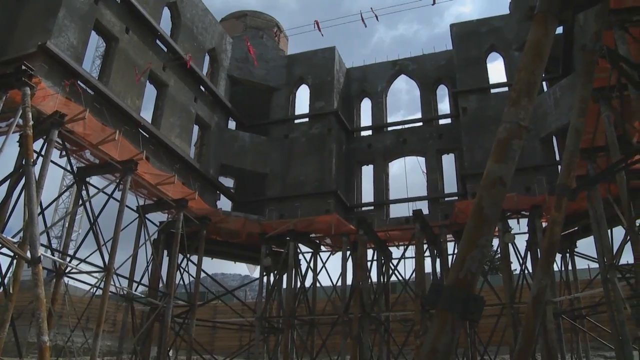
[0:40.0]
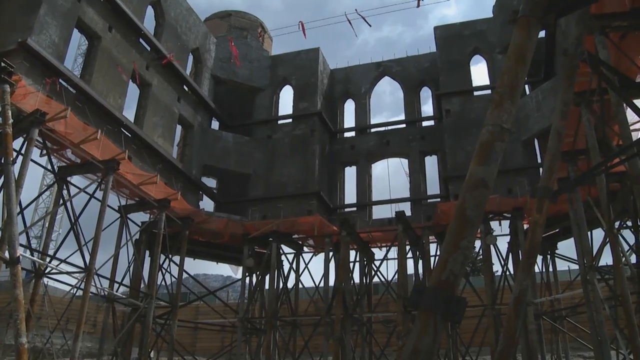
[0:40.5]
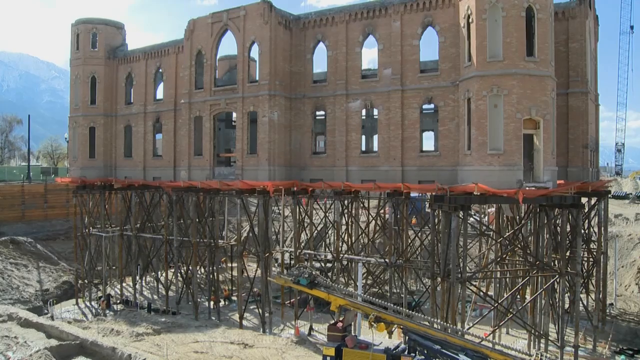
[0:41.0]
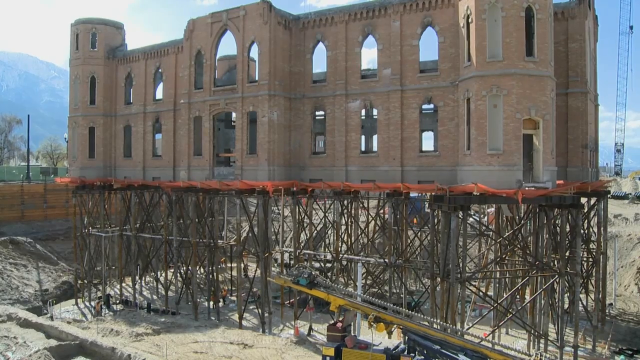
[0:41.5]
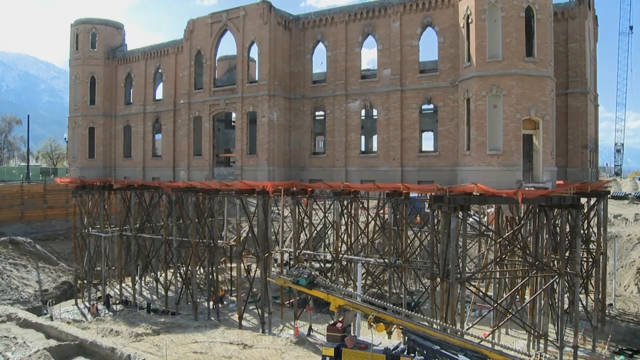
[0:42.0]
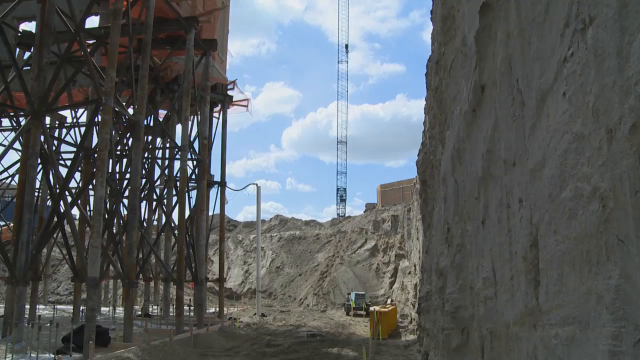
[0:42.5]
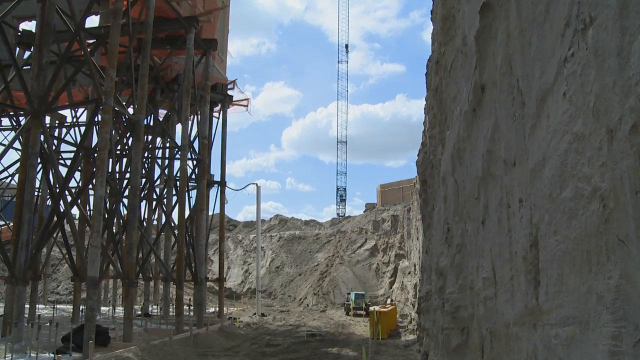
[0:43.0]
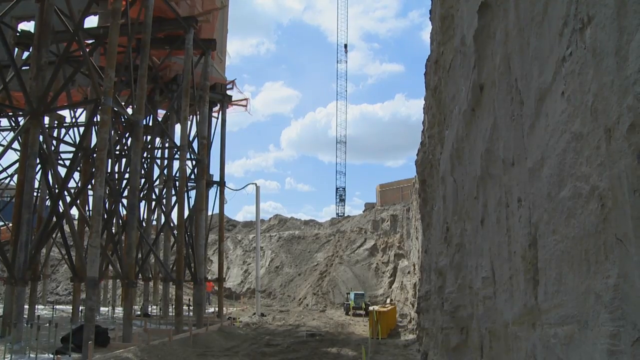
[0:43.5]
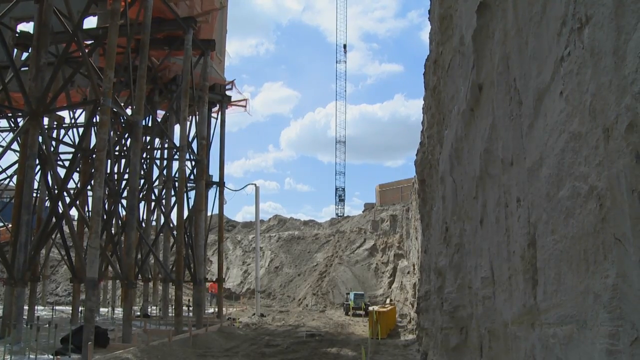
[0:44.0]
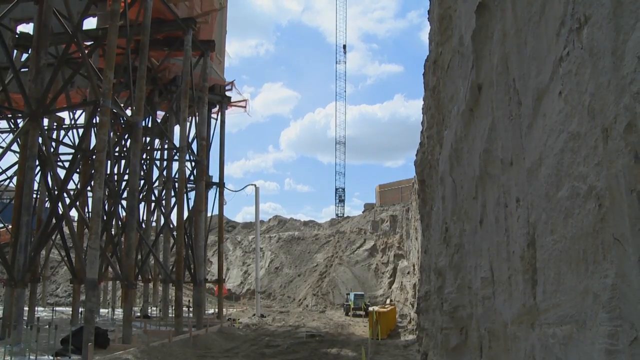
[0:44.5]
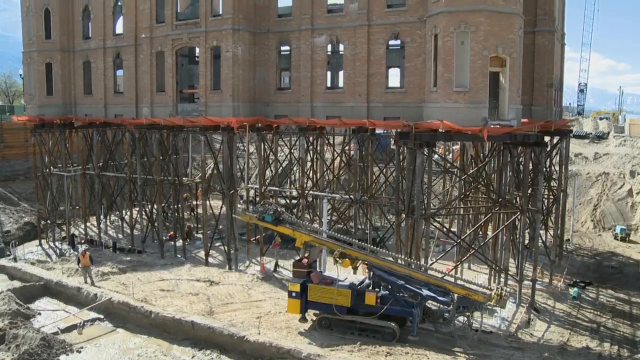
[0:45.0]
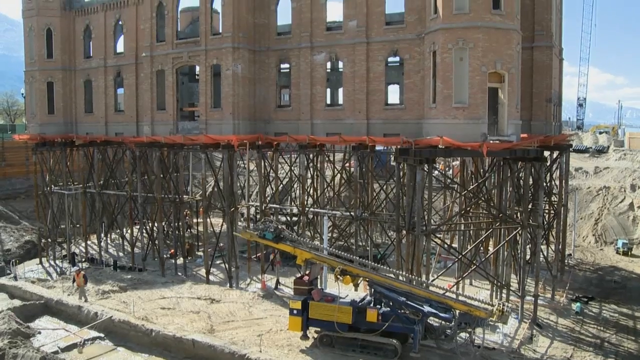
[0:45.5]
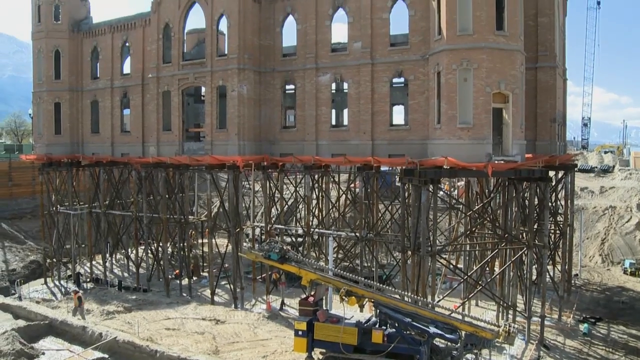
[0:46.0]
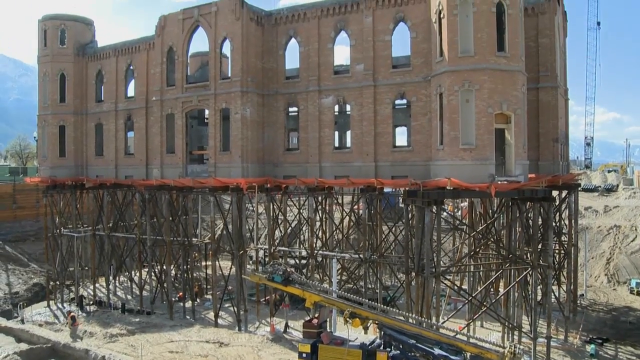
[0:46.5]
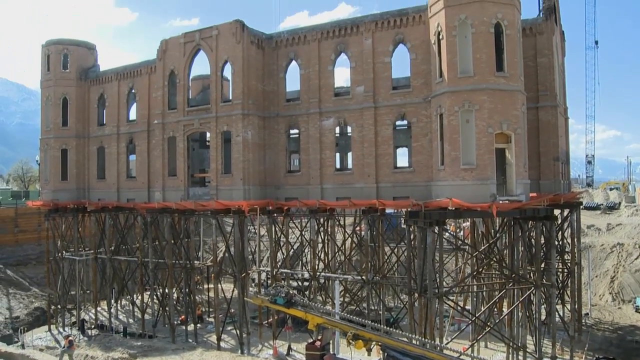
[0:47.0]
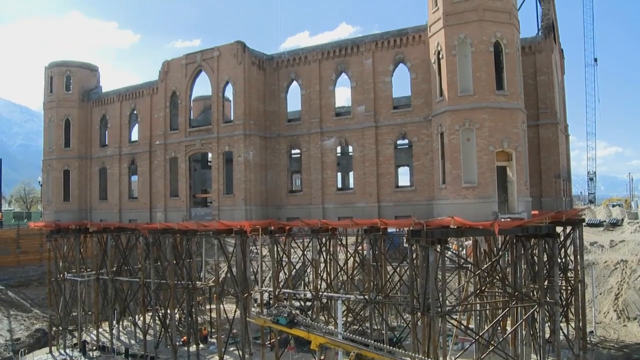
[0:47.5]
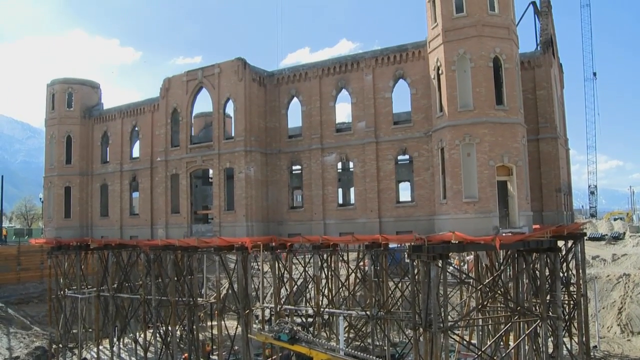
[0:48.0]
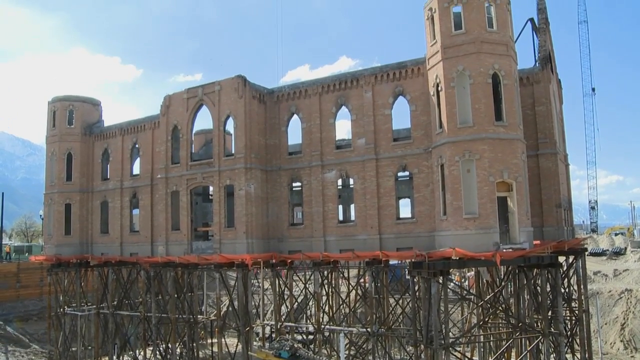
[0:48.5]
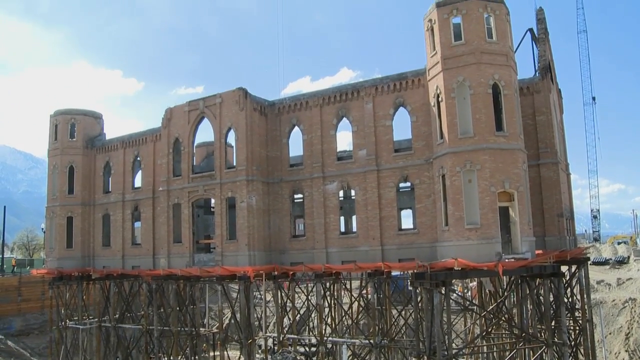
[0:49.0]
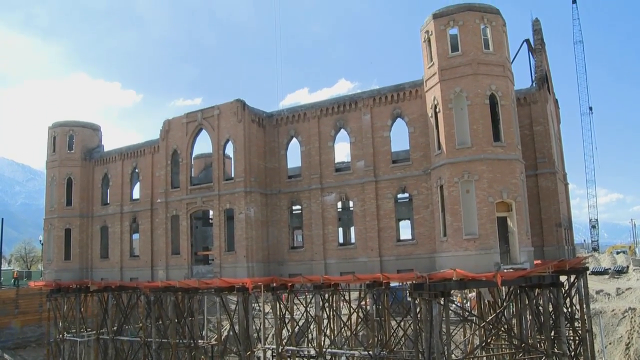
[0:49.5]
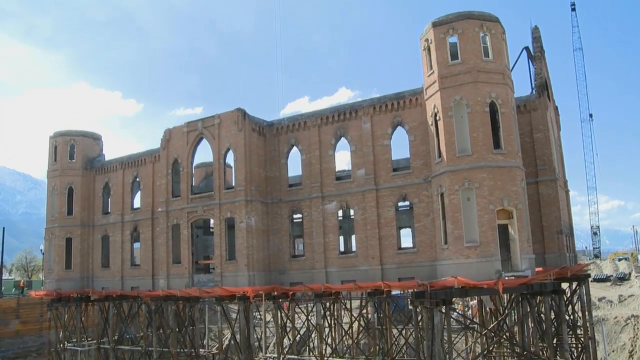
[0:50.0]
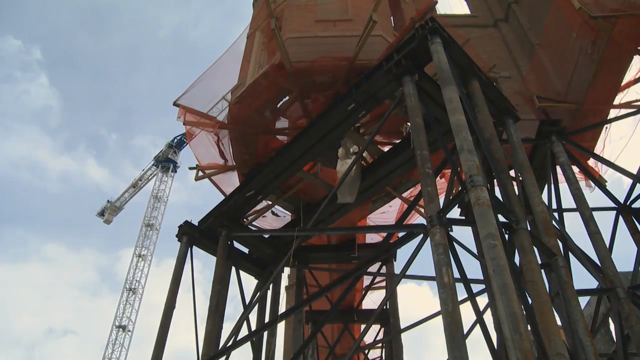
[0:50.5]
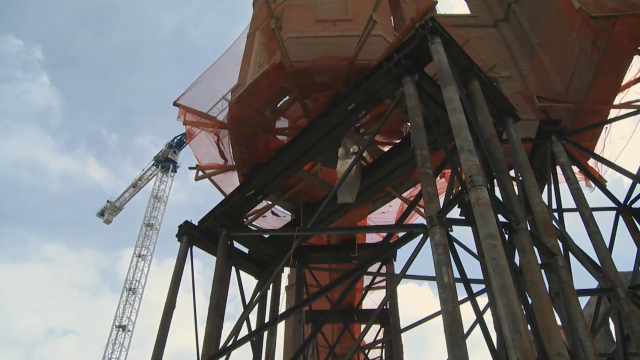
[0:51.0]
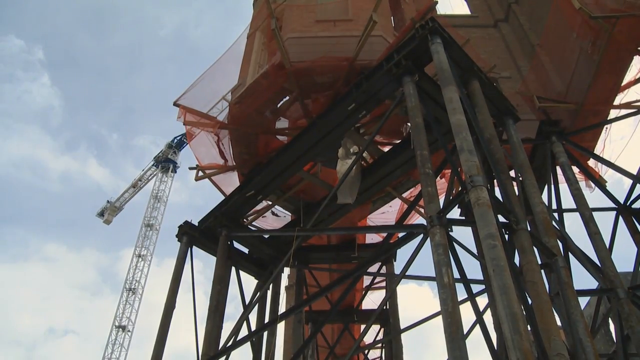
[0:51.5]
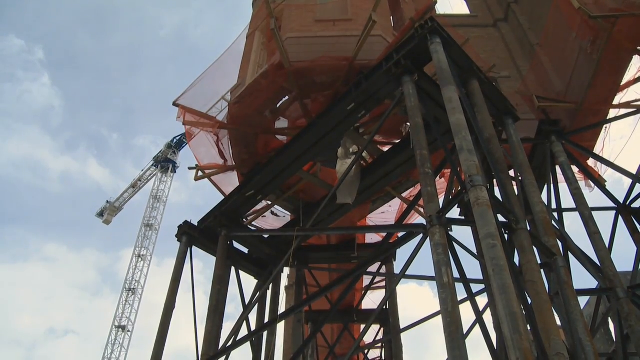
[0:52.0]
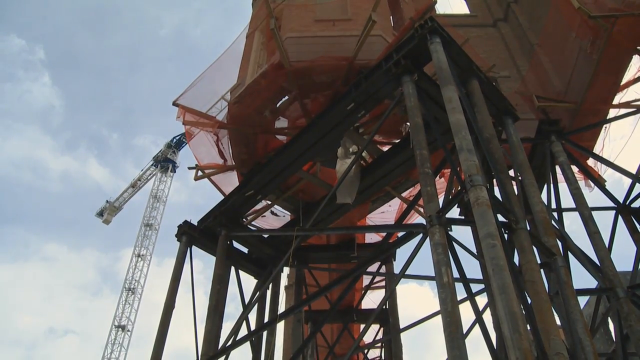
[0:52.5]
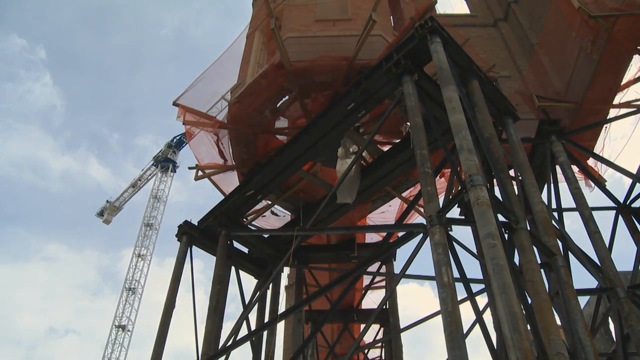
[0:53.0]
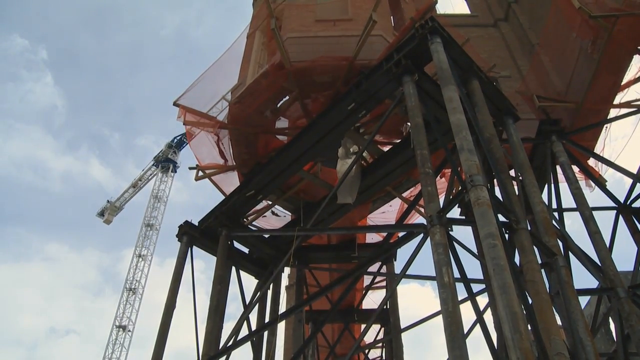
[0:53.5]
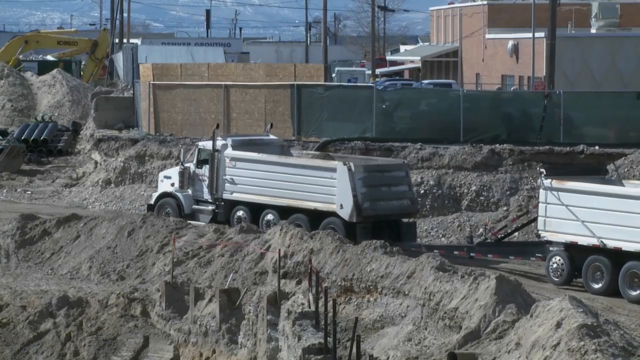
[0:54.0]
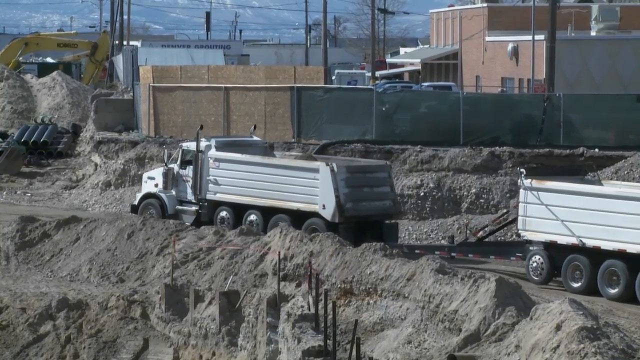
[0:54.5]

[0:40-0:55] More exterior shots of the church follow, including a side profile and a view from underneath showing the scaffolding. A truck carries another vehicle. Another cutaway to the side shows more vehicles underneath. A vehicle drives along a dirt path with another vehicle behind it towing some sort of piece of equipment. A person walks through the frame. The angles vary: from different sides, one looking up from the bottom, one more panned out, and one of a dirt path, apparently used for taking supplies in.